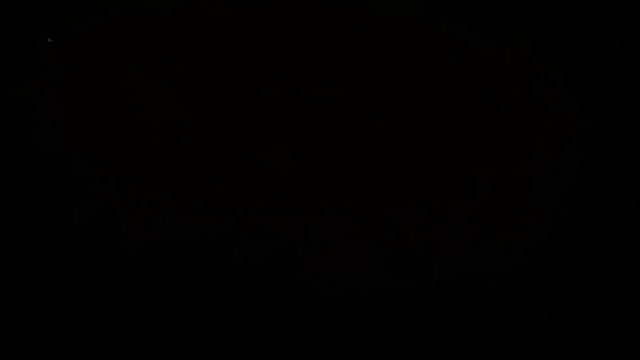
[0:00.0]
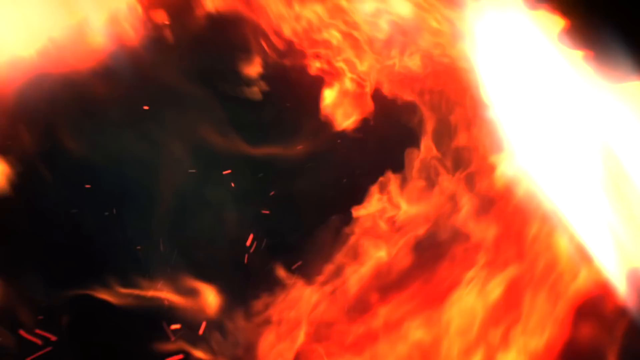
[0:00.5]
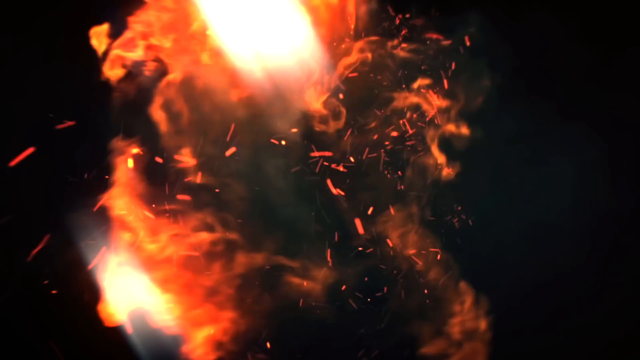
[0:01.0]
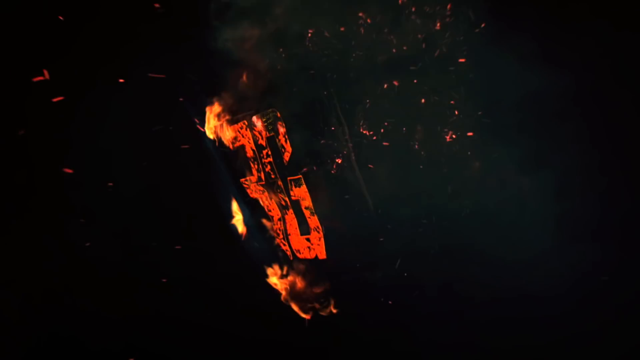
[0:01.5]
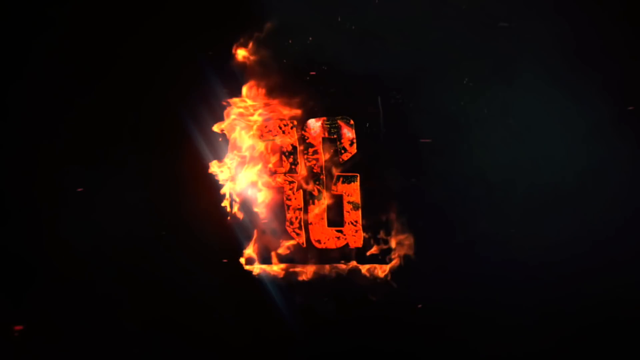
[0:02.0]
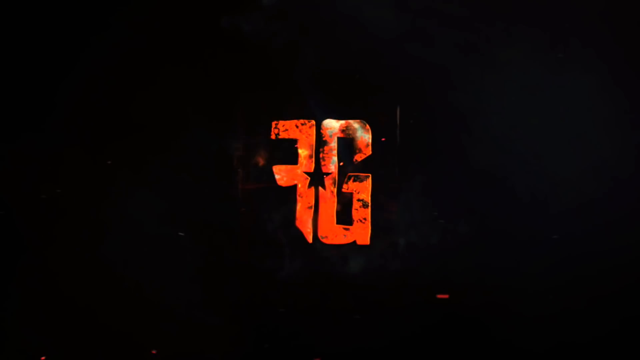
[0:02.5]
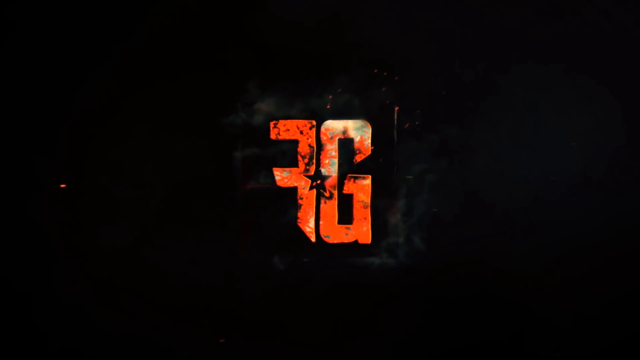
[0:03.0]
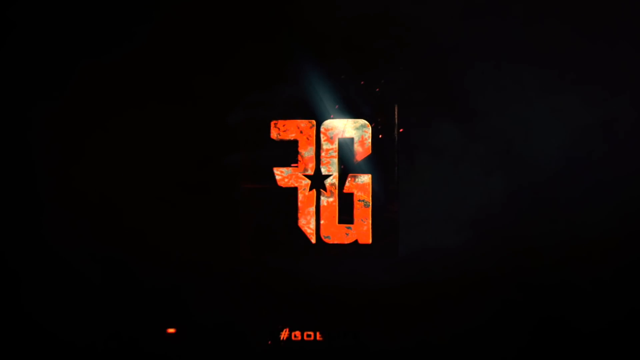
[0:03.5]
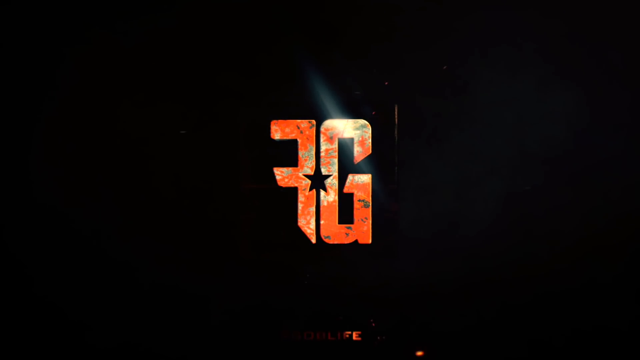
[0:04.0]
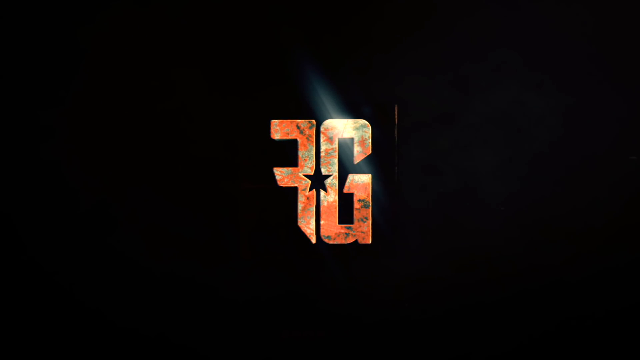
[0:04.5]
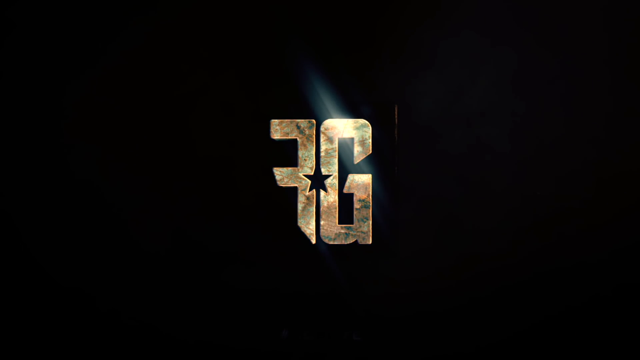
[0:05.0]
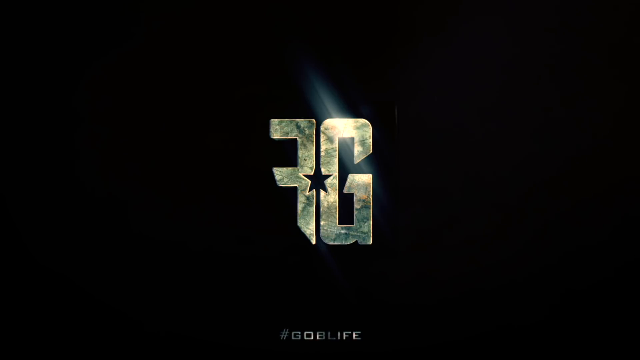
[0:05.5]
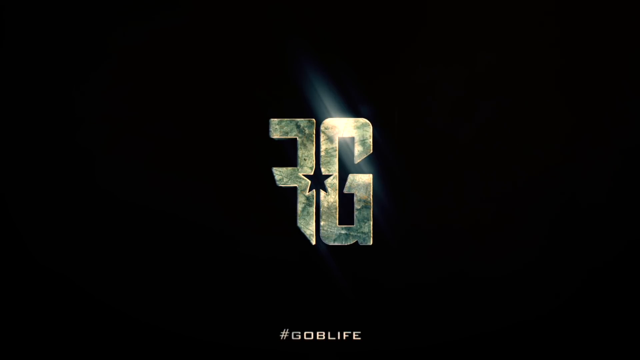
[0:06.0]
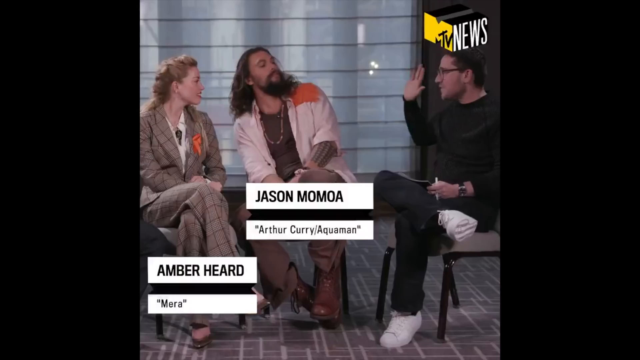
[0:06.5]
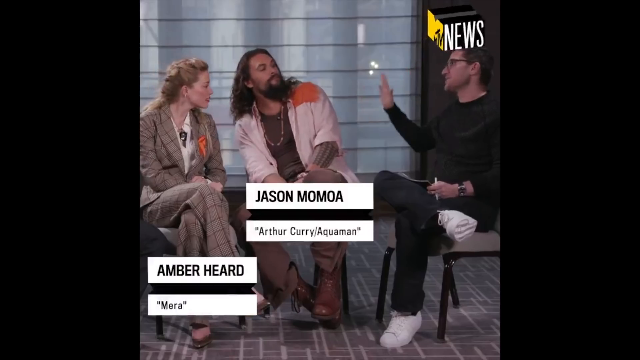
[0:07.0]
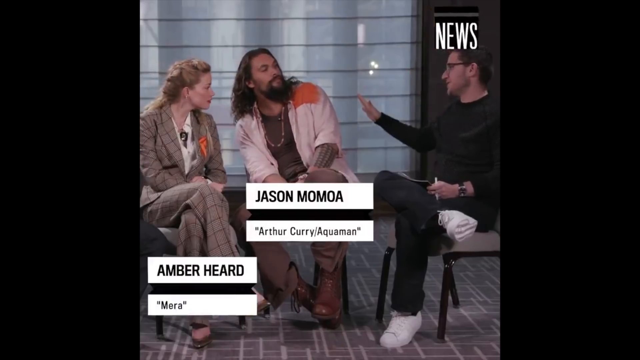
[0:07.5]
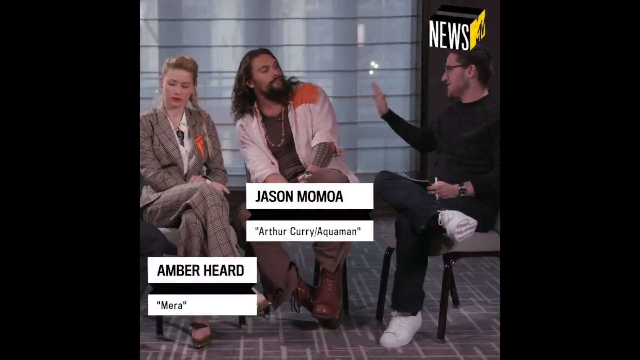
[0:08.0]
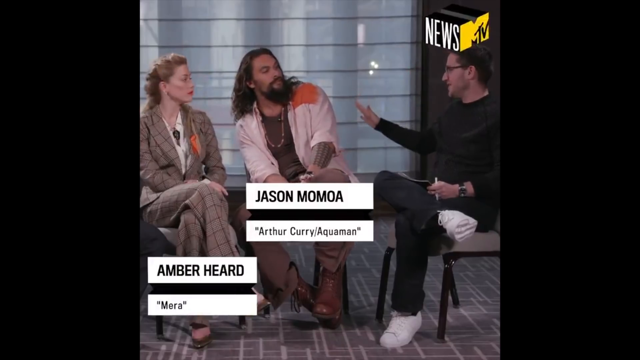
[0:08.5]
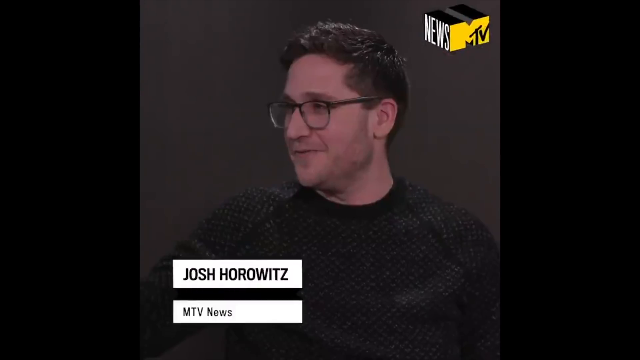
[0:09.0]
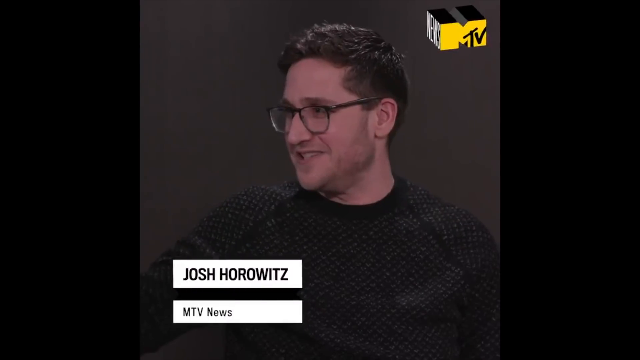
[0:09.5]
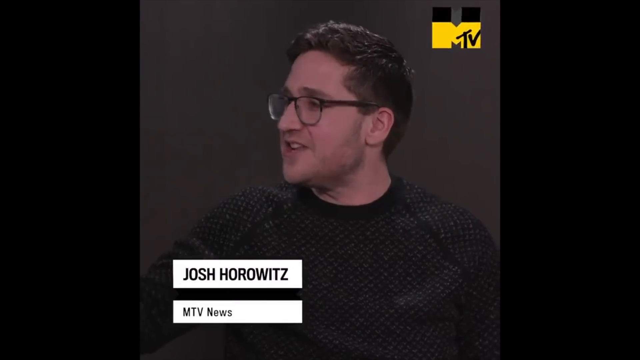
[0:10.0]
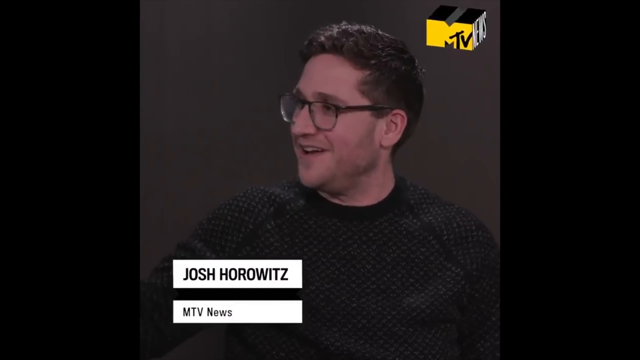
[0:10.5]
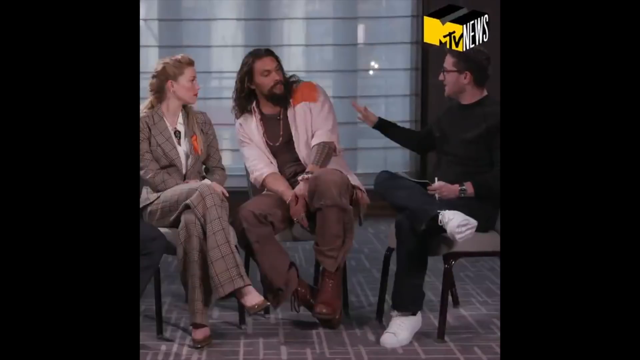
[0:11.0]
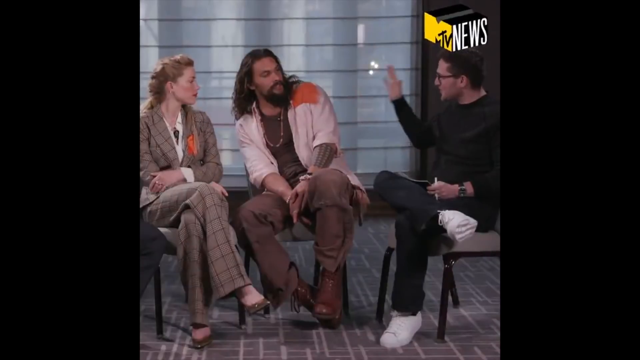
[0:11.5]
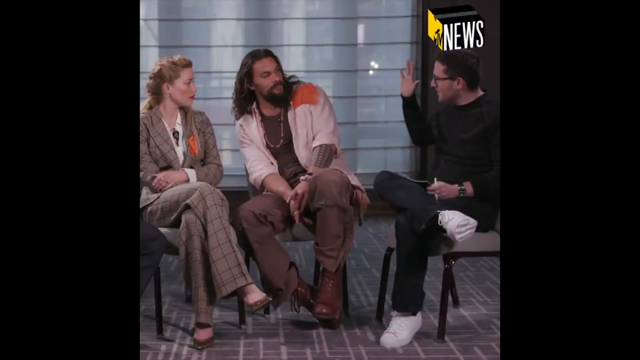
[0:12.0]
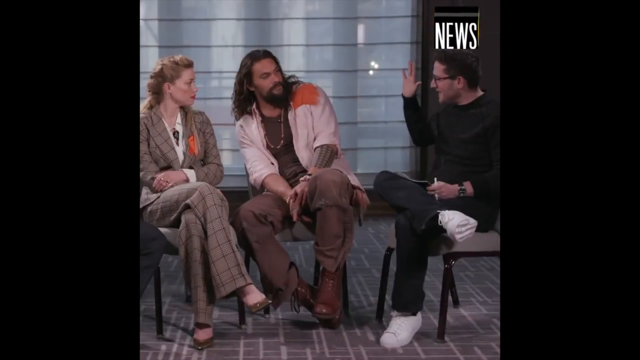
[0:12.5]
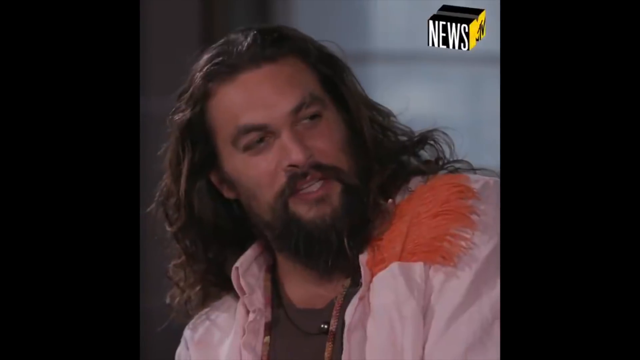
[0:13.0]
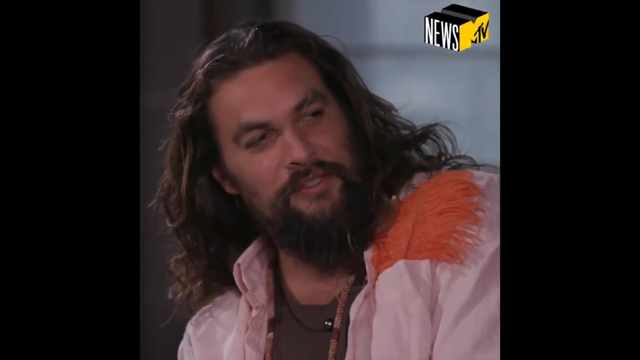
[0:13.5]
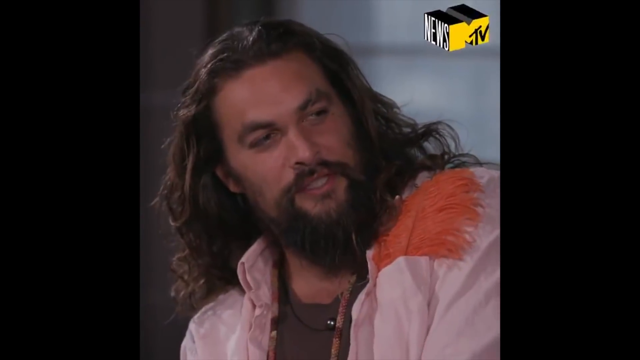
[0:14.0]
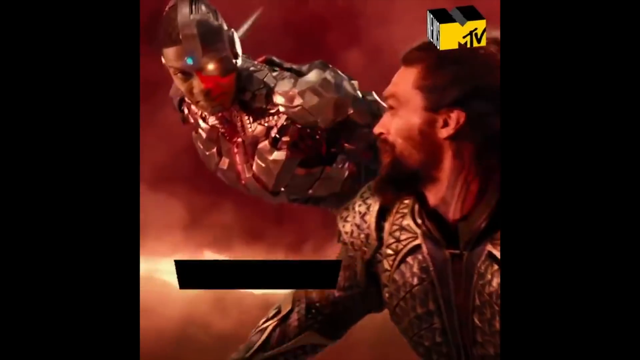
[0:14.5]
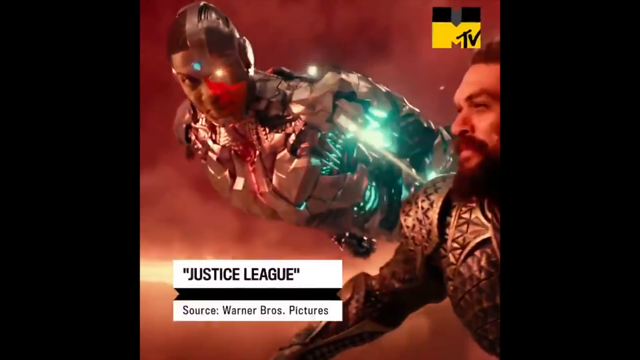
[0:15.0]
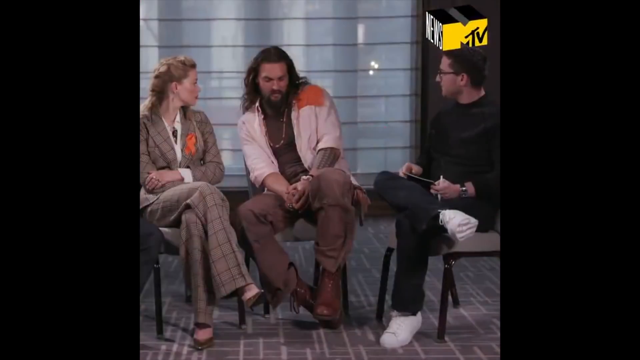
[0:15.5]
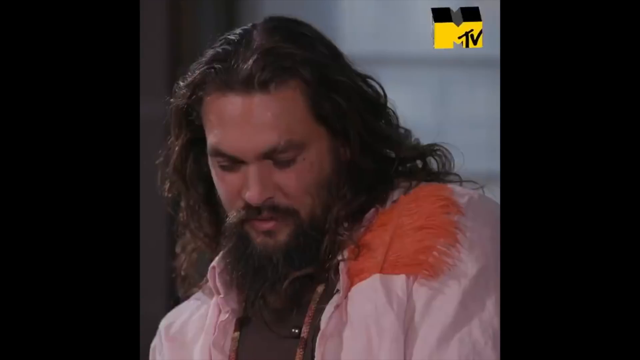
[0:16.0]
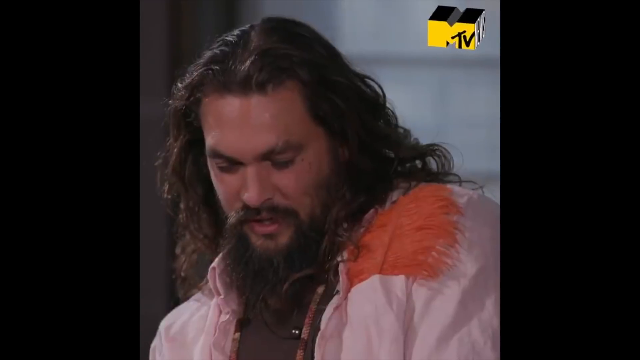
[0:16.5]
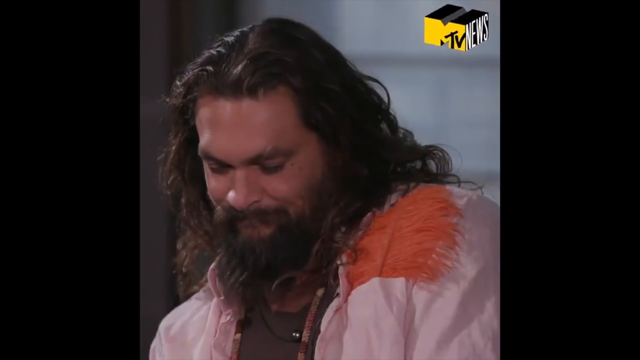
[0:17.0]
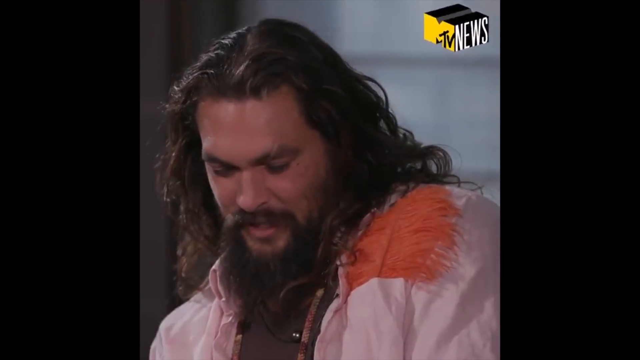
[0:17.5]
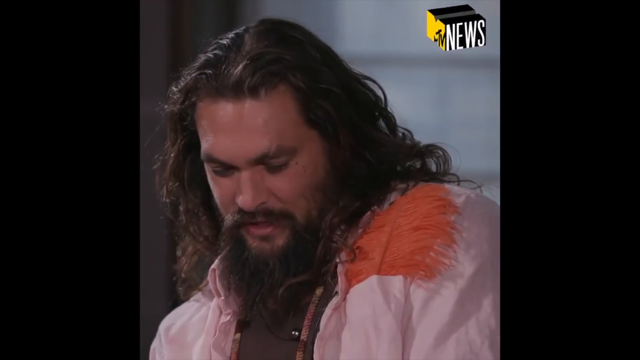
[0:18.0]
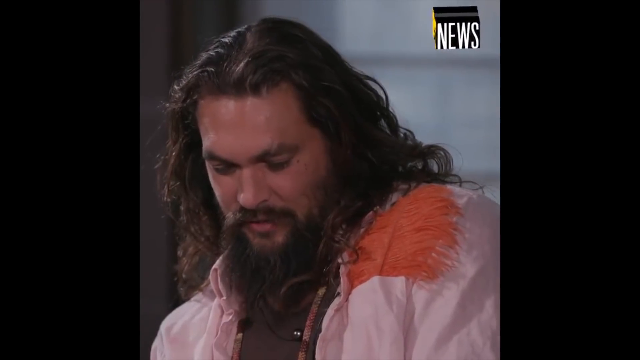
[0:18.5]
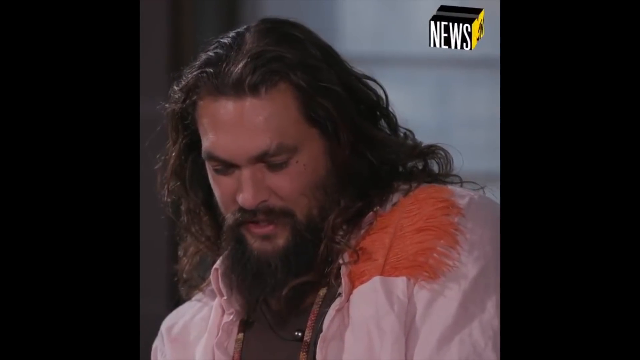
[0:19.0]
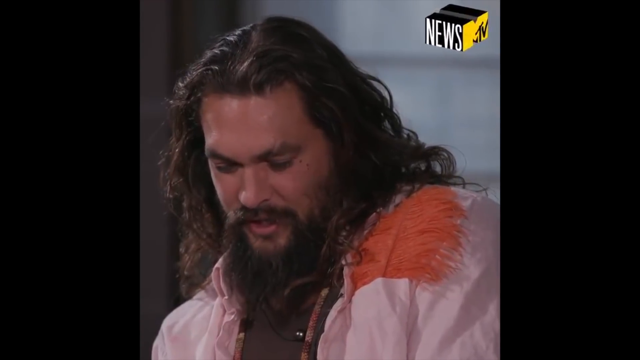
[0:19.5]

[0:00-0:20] Fire appears first, then a backwards F and G in orange lettering, which quickly changes to a silver color. The video moves to an interview between Josh Horowitz, Jason Momoa, and Amber Heard. A quick clip from Justice League shows Cyborg flying beside Aquaman, after which the shot focuses on Jason Momoa speaking and looking down. Amber Heard wears what looks like a plaid, brown suit with a white shirt underneath. Jason Momoa wears a gray shirt with a white and orange shirt over top of it, a necklace, brown pants, and brown boots; his hair is long and he has a full beard. Josh Horowitz wears a black sweater, jeans, white shoes, and glasses.